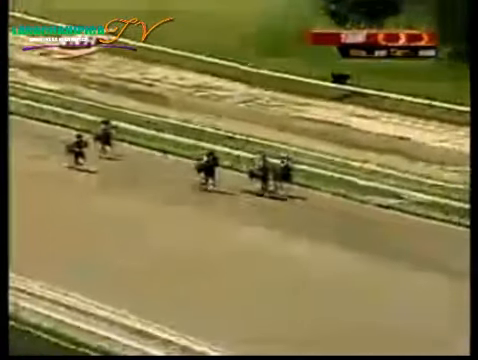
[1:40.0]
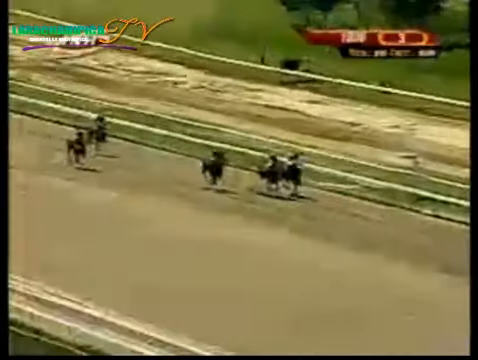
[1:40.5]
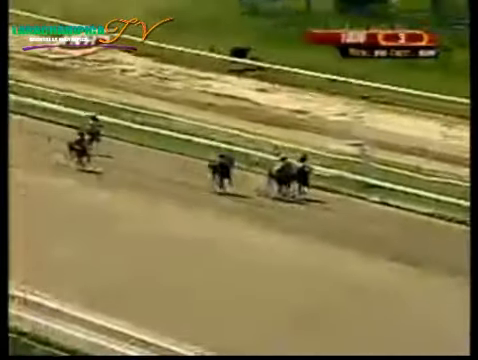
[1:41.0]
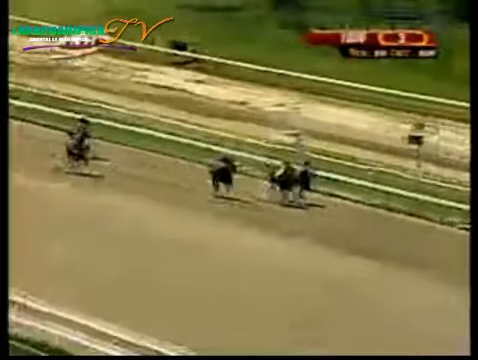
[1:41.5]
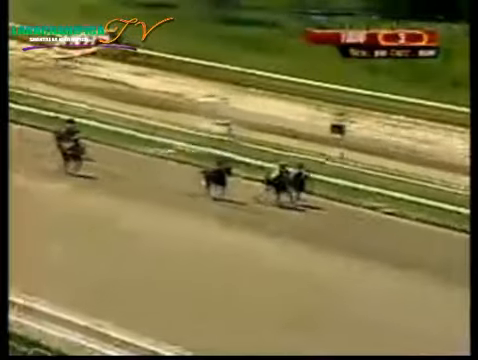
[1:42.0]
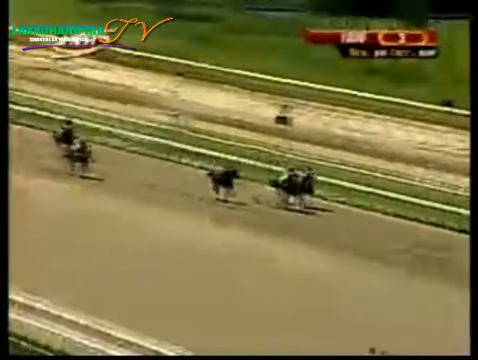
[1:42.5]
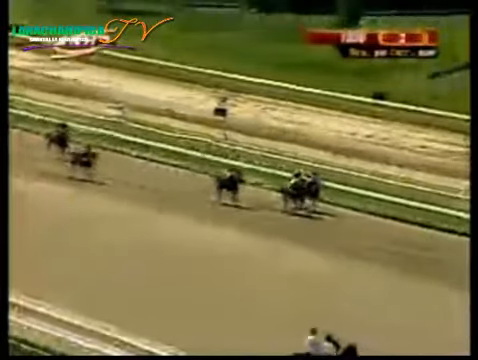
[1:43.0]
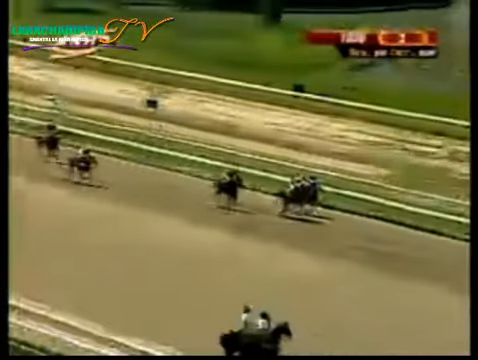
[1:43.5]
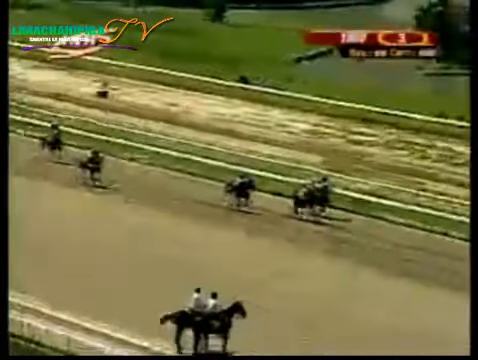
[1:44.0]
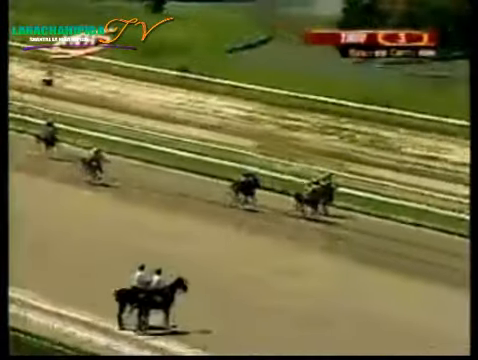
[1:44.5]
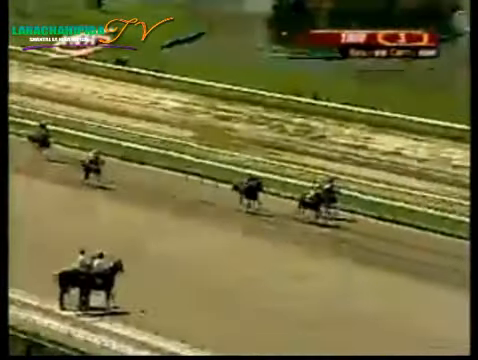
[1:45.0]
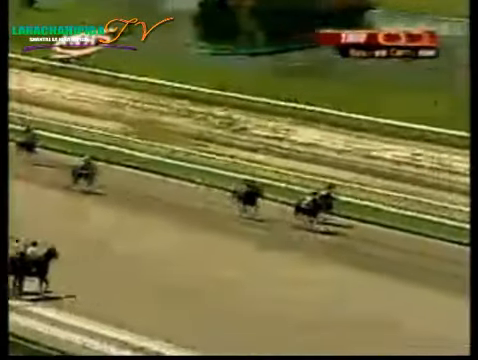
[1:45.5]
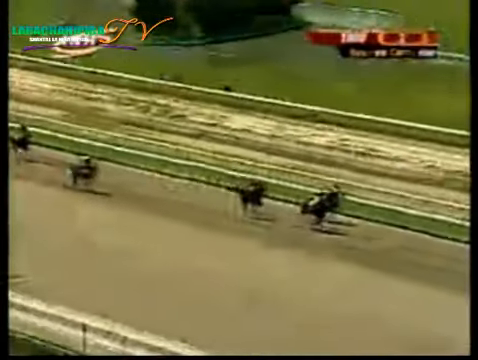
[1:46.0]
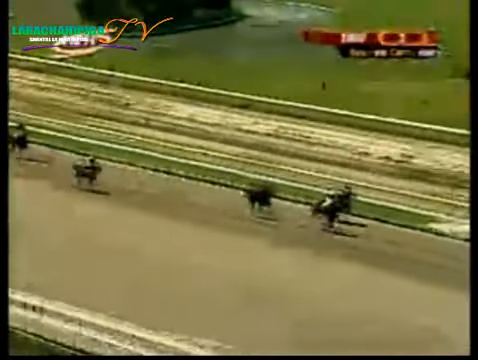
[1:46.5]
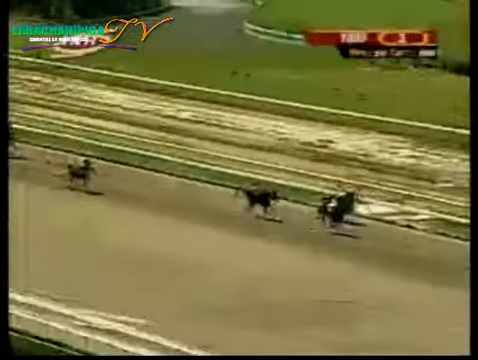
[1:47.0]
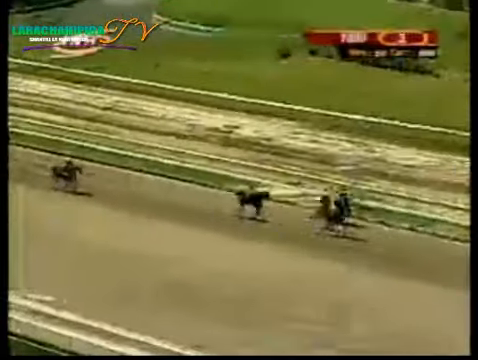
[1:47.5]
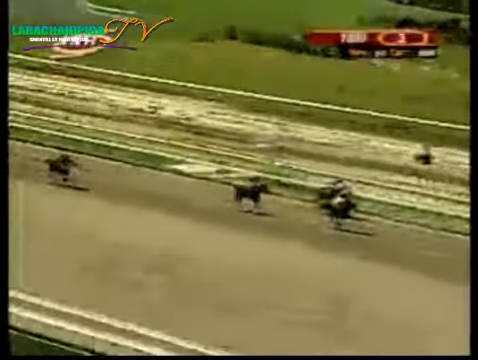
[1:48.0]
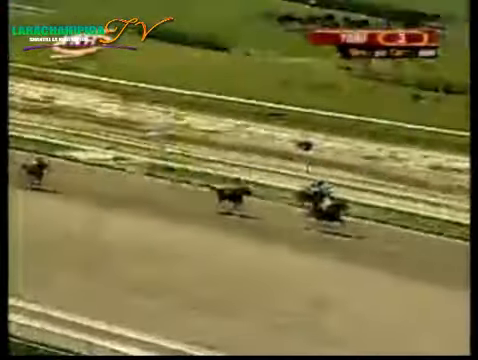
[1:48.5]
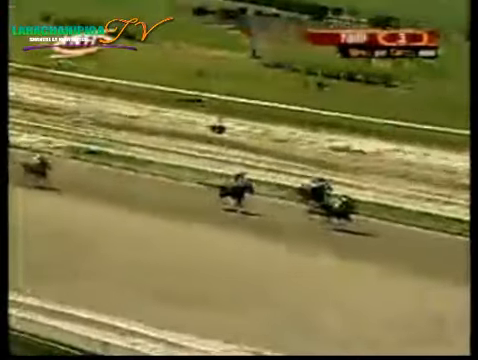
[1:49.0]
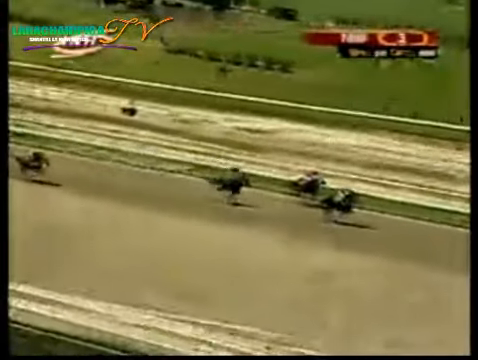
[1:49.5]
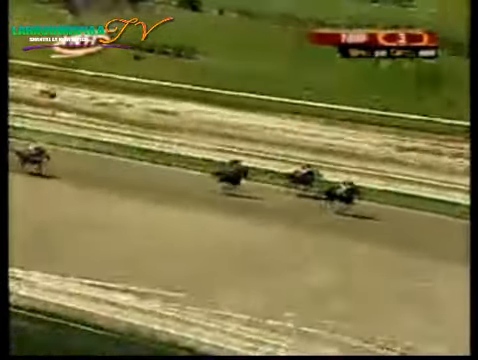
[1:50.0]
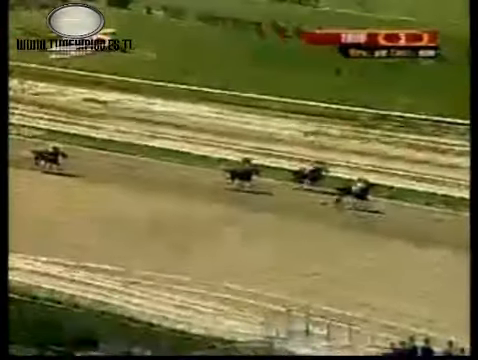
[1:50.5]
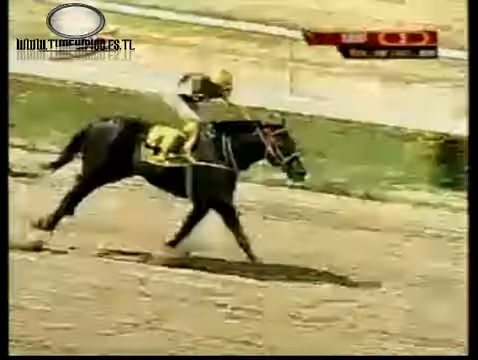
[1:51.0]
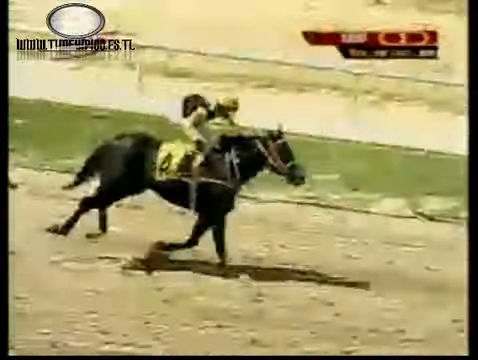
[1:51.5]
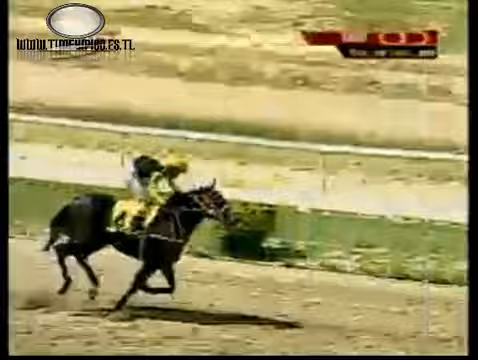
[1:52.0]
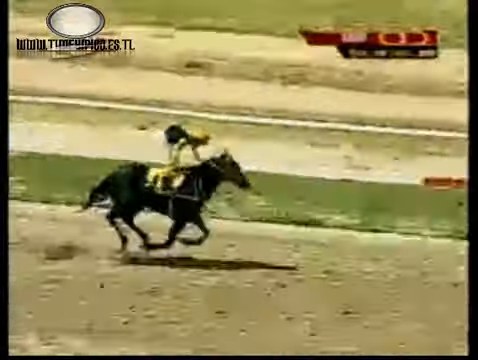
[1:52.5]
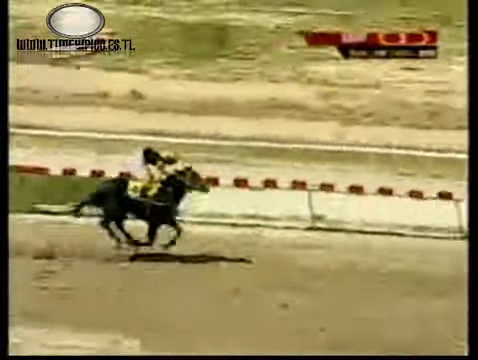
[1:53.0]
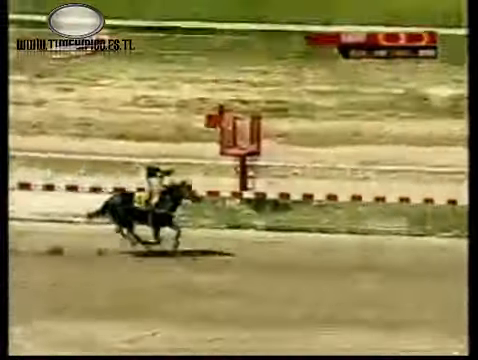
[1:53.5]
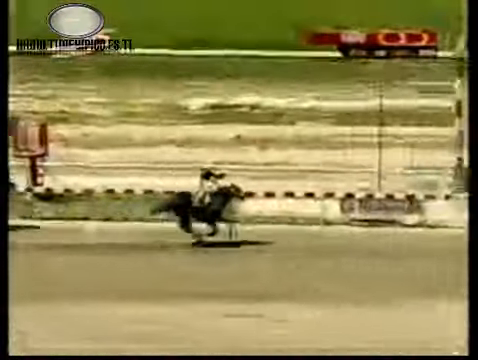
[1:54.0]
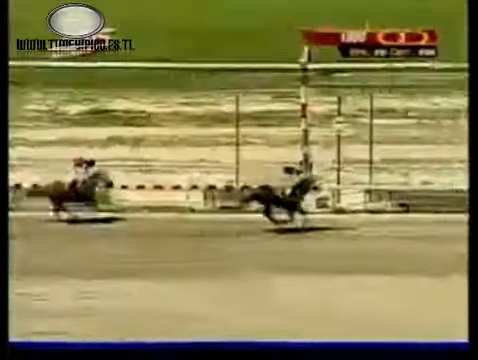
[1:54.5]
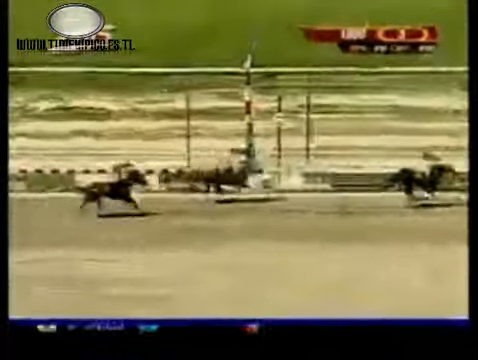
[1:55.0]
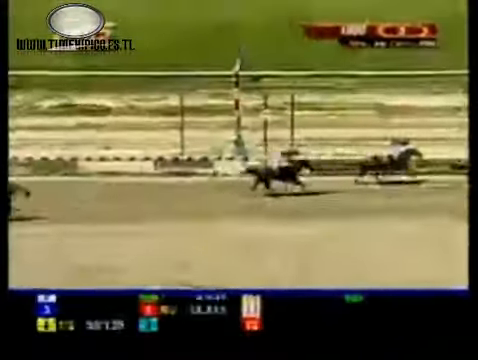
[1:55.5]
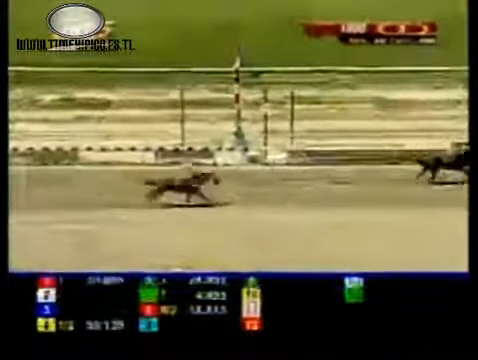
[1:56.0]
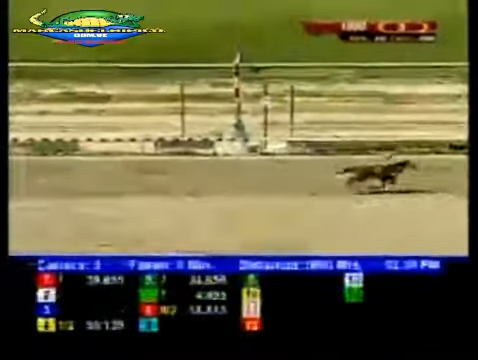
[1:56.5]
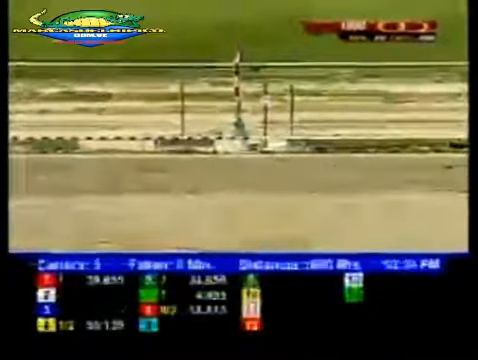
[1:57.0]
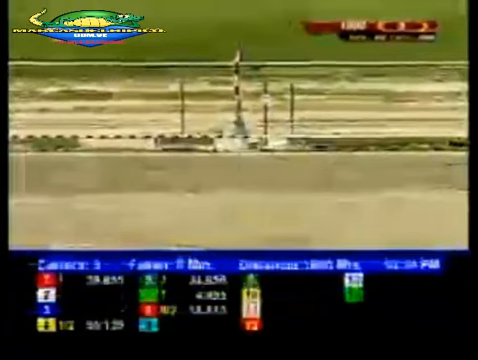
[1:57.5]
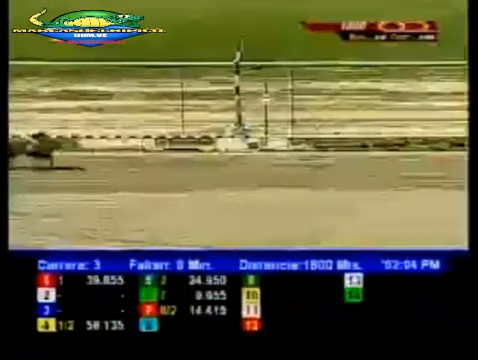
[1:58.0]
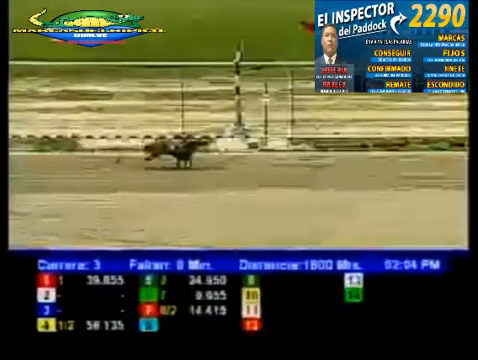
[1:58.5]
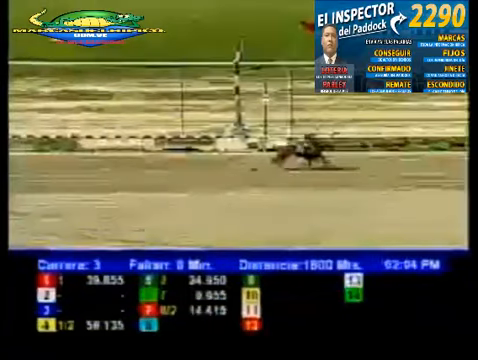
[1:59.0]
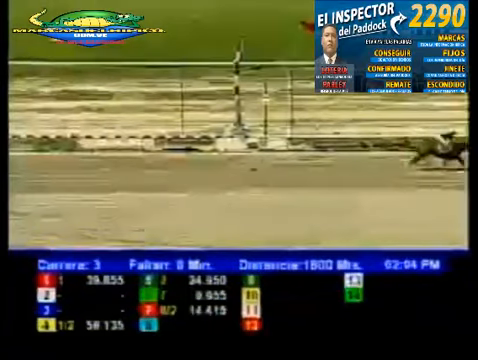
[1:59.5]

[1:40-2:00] From this far-away angle, two horses appear to be side by side, tied for first place, and the finish line appears to be approaching soon. There are three other horses in the back, two of them at the back end. The horse in last place is so far away that it is hard to keep in the frame, and it eventually leaves the frame as the horses keep moving. A new horse appears to pull in front as a distinct leader, though its number is hard to see. The camera zooms in on it, and it appears to be number four with a yellow tag. Right at the end, horse number four pulls in front and appears to win the race.